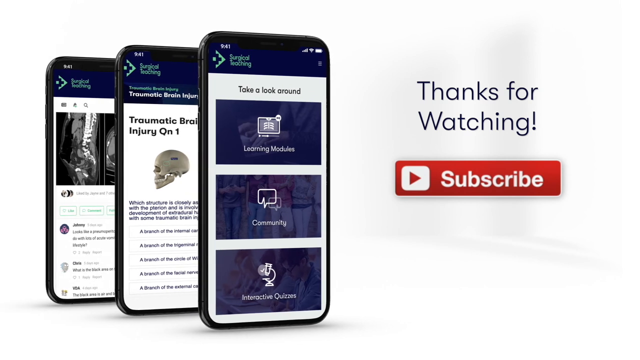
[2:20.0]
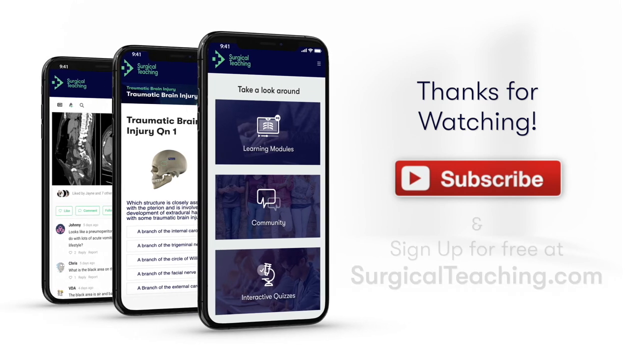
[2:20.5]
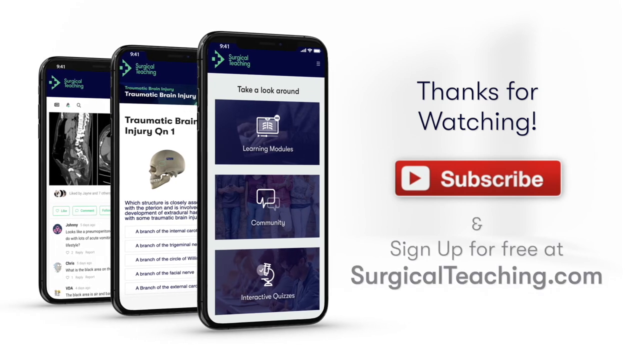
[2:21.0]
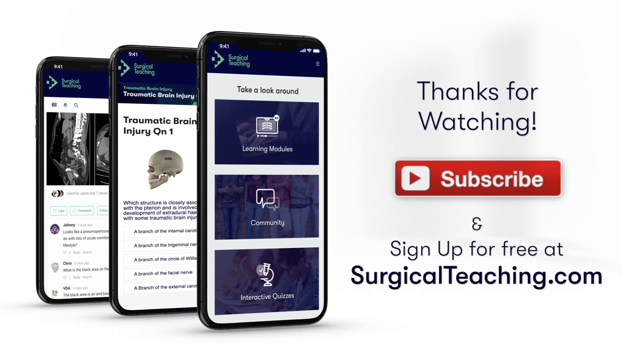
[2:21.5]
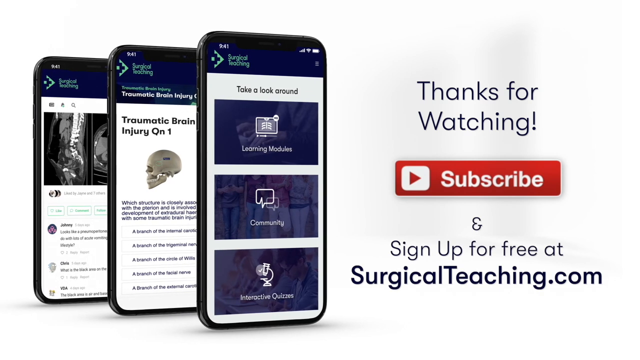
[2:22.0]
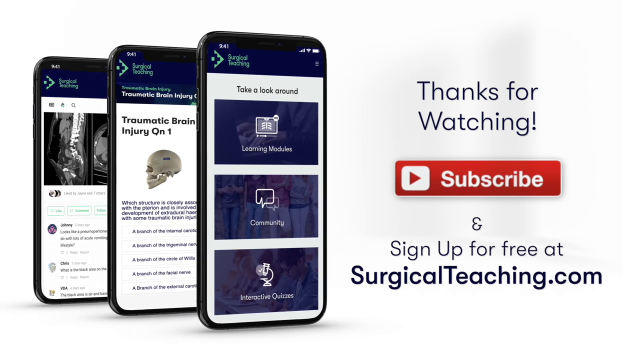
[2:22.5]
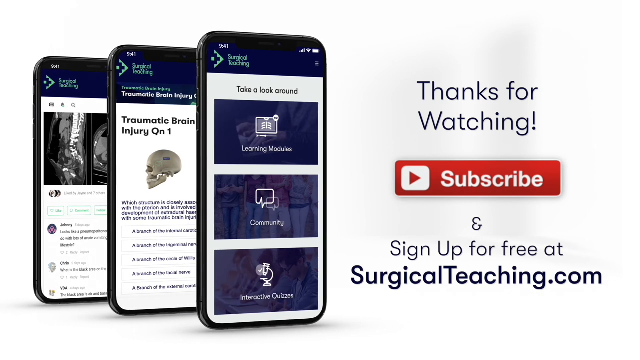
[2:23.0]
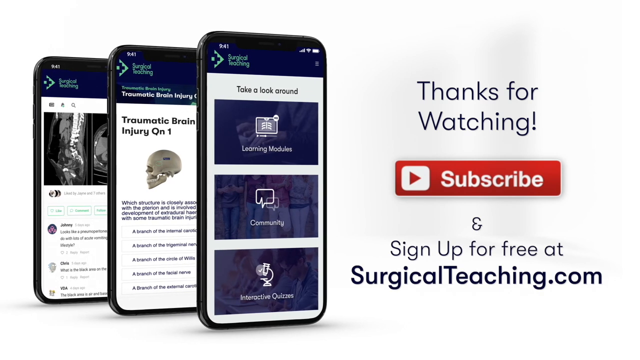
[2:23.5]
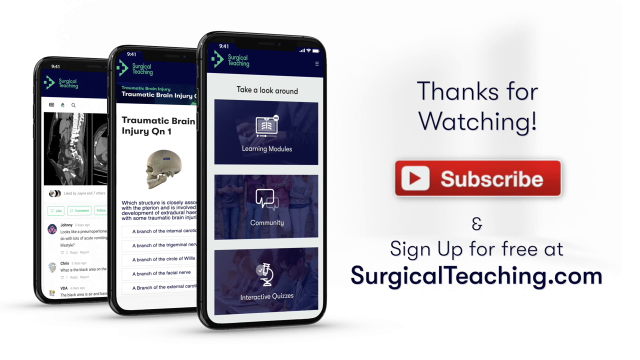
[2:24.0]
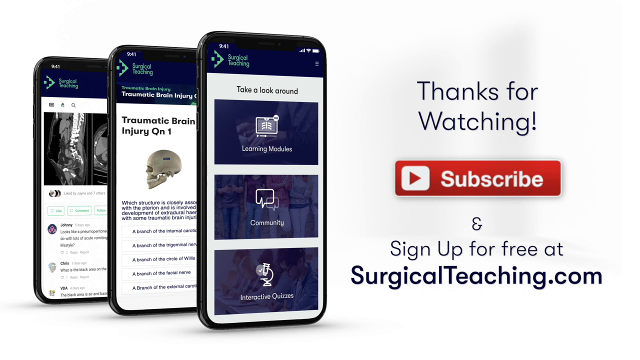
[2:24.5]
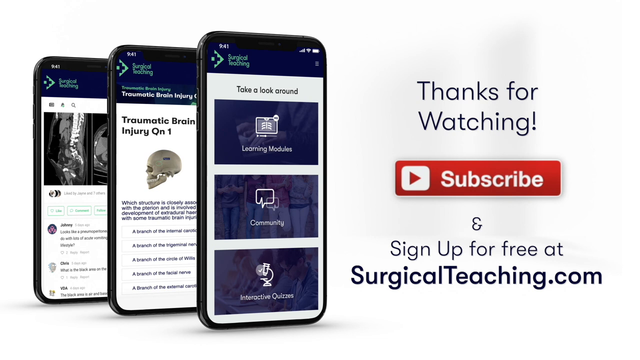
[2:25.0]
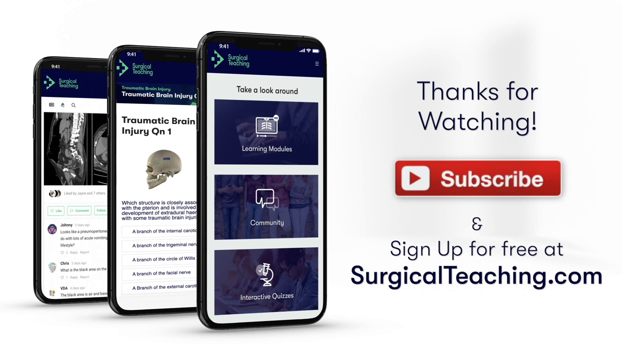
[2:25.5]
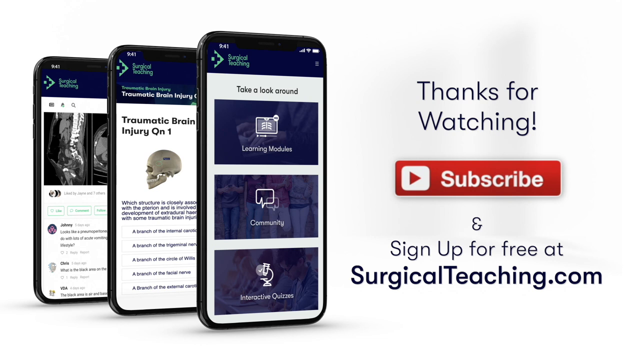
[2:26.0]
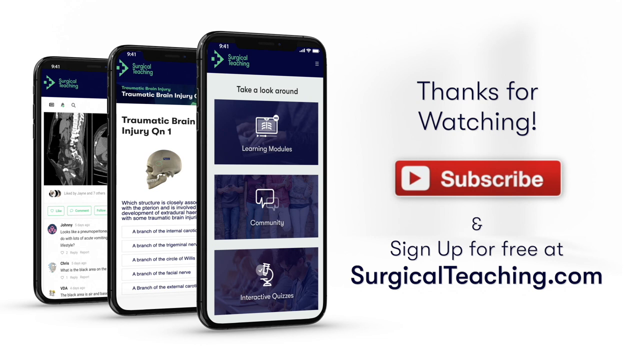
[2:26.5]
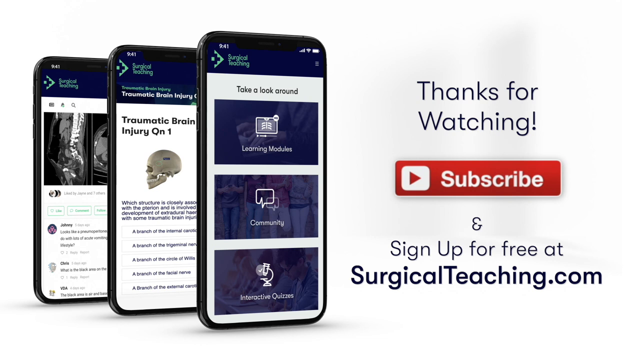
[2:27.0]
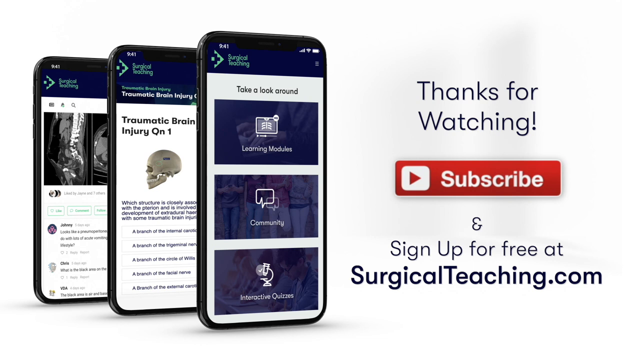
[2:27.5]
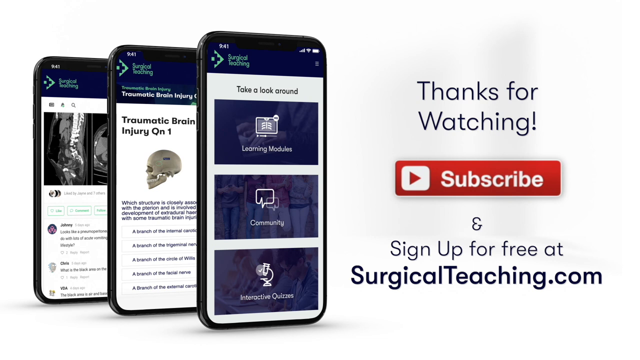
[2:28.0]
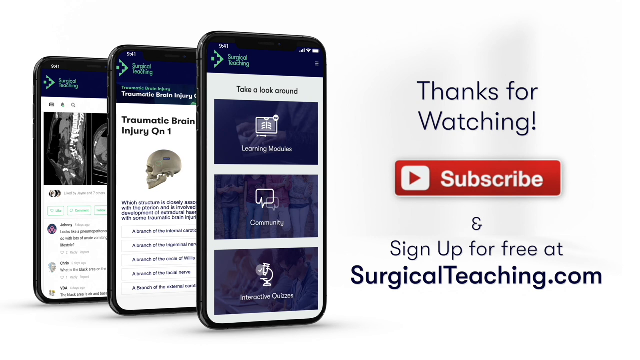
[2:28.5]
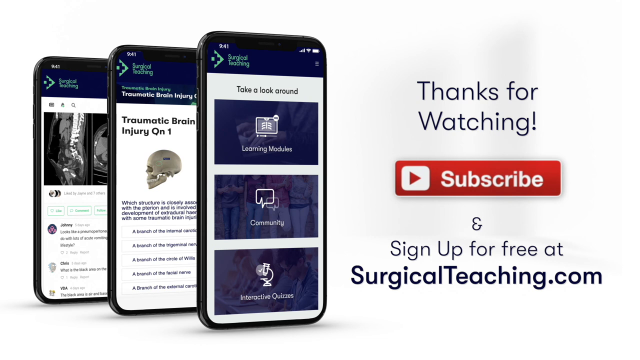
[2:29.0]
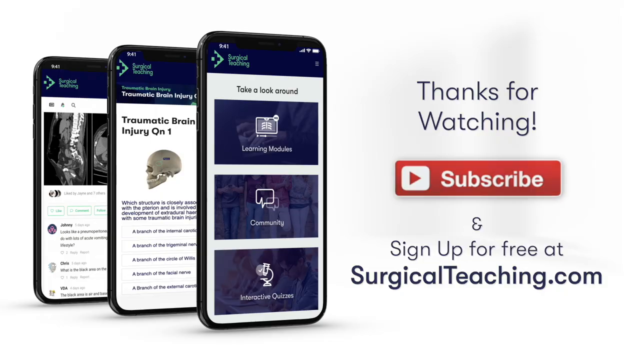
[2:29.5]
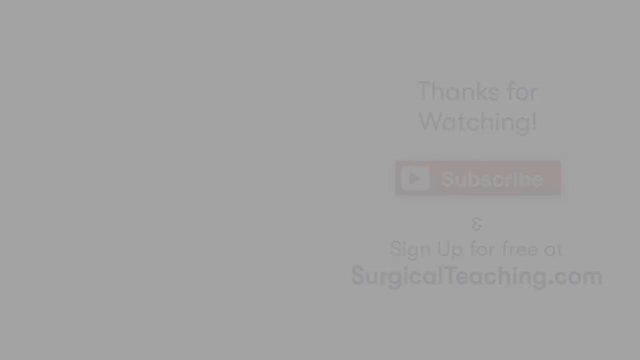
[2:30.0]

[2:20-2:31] Three black smartphones appear on a white background, each with an arrow logo at the top reading "Surgical Teaching." The first phone has links and text reading "Take a look around." The second phone reads "Traumatic Brain Injury" and shows a skull. What is on the left-most side of the phone is difficult to tell. On the right side of the screen, black text reads "Thanks for watching," followed by a red subscribe button. Then the words "Sign up for free at surgicalteaching.com" appear at the bottom right of the screen. The video ends by fading to black.